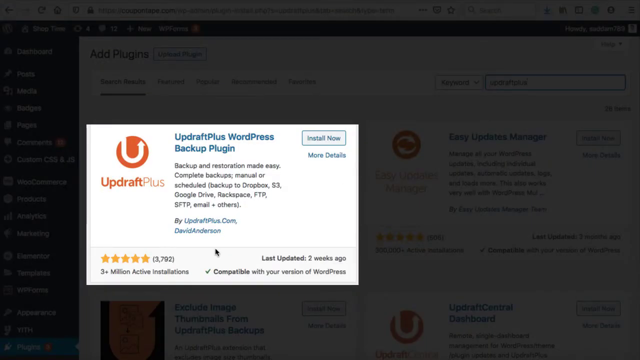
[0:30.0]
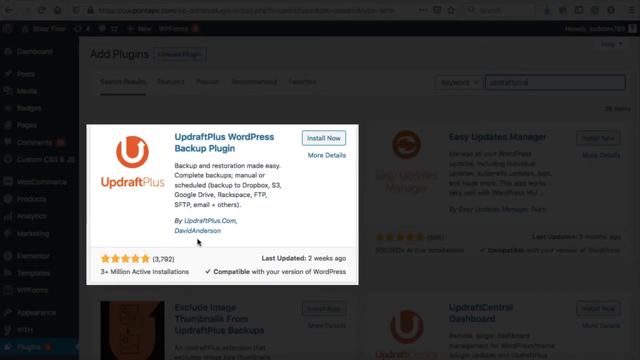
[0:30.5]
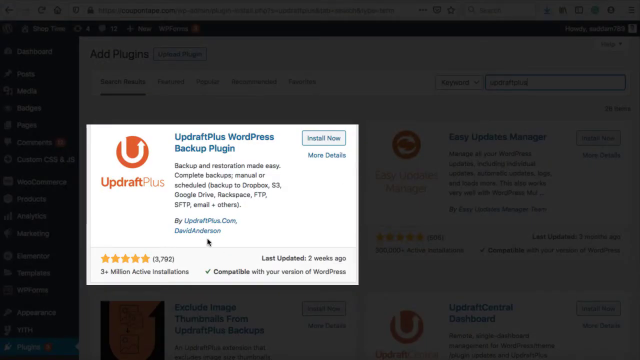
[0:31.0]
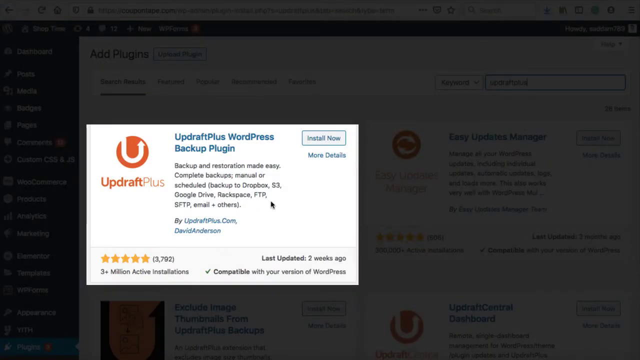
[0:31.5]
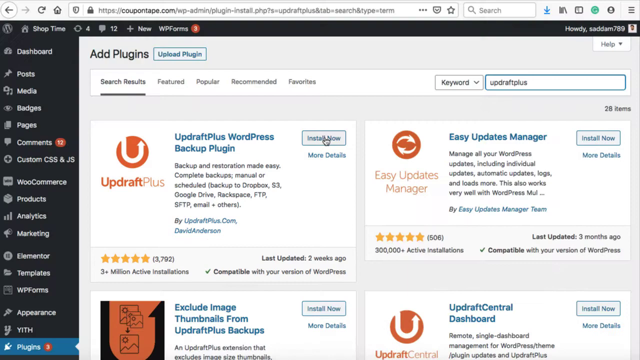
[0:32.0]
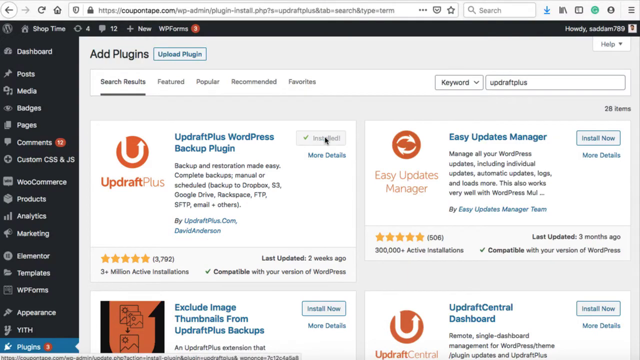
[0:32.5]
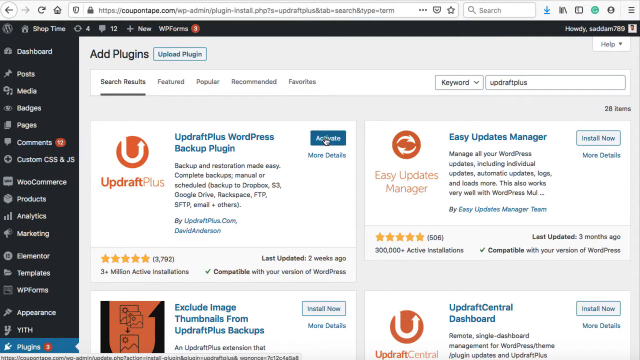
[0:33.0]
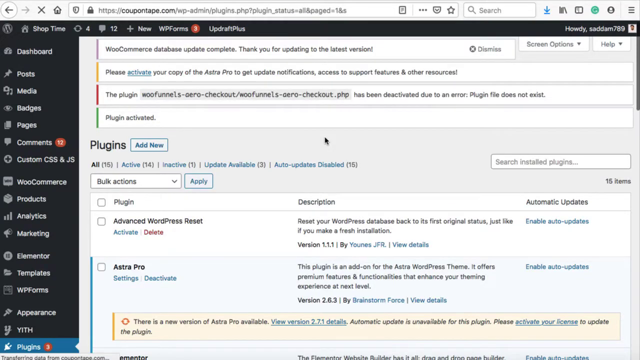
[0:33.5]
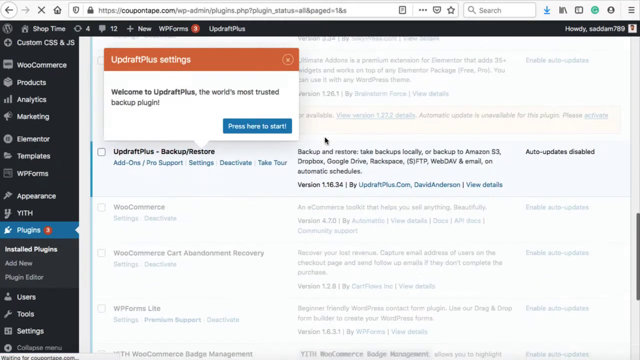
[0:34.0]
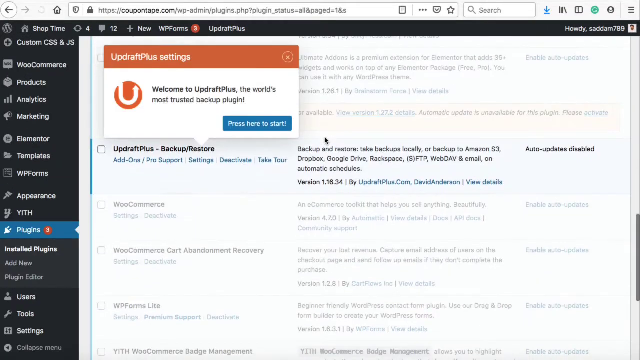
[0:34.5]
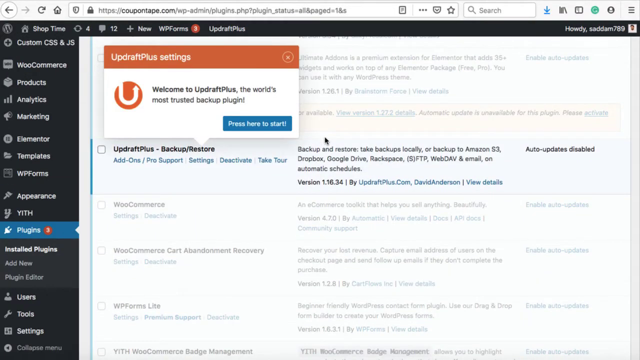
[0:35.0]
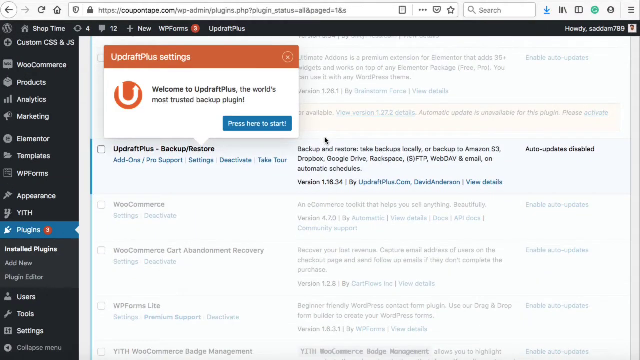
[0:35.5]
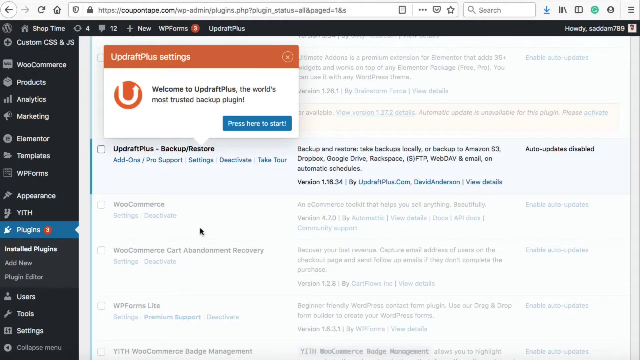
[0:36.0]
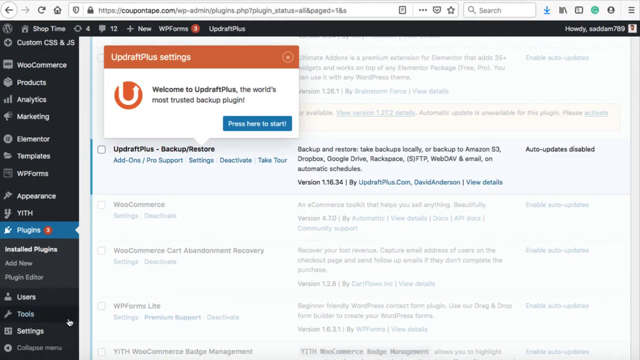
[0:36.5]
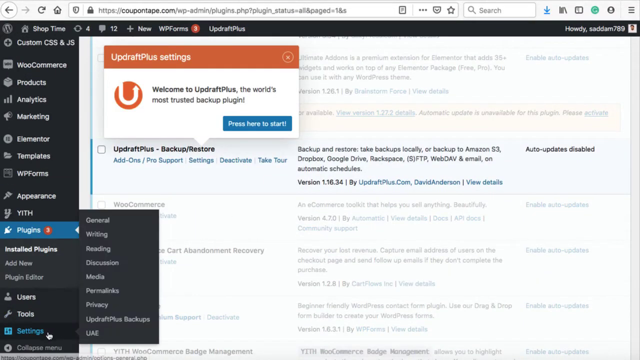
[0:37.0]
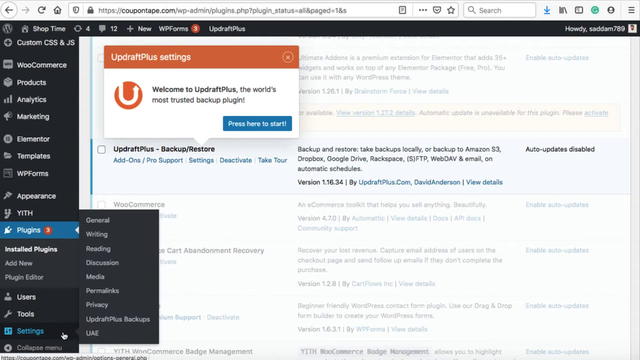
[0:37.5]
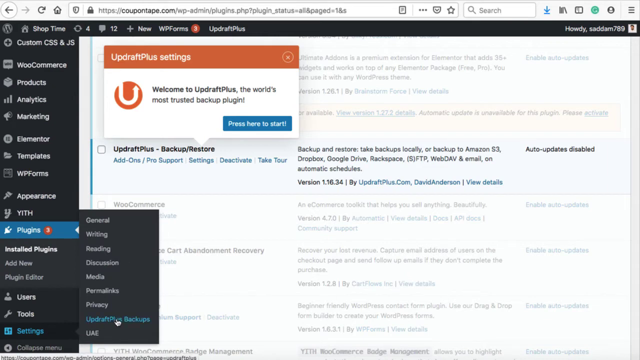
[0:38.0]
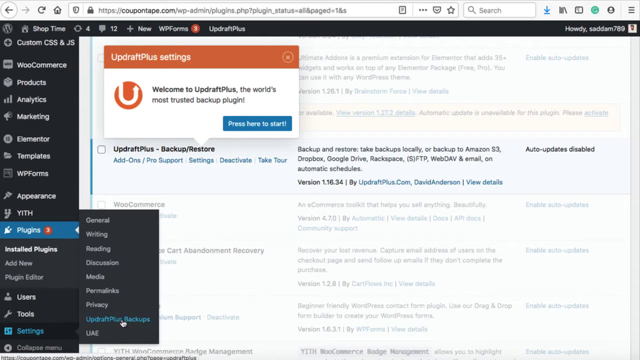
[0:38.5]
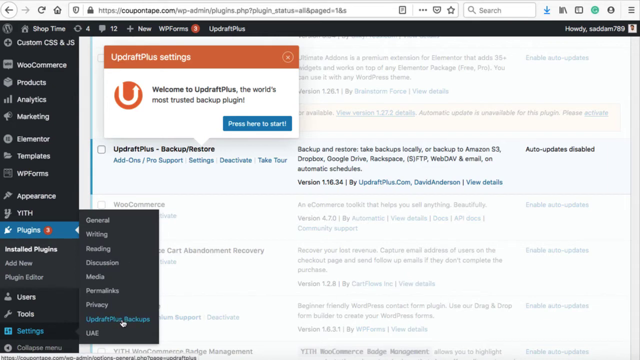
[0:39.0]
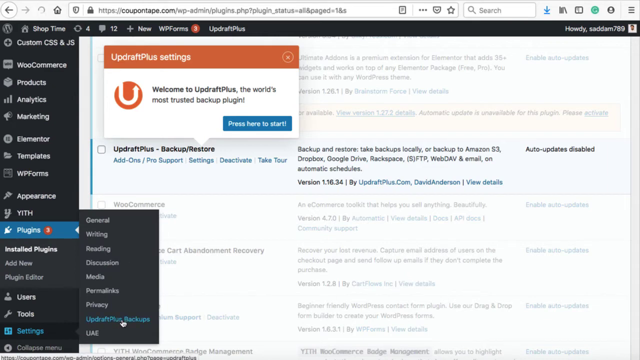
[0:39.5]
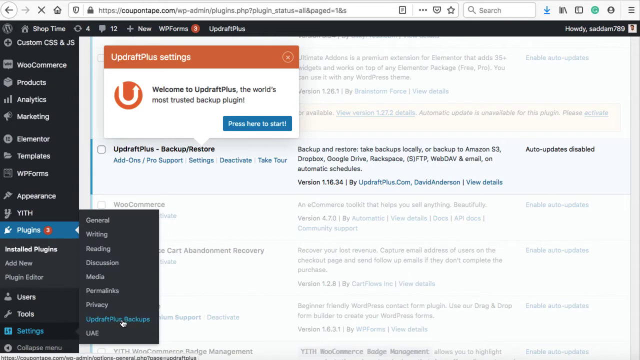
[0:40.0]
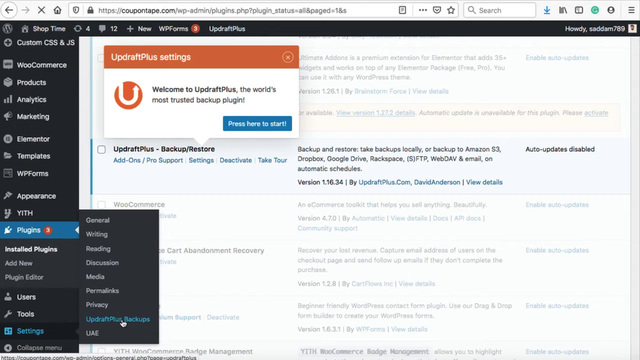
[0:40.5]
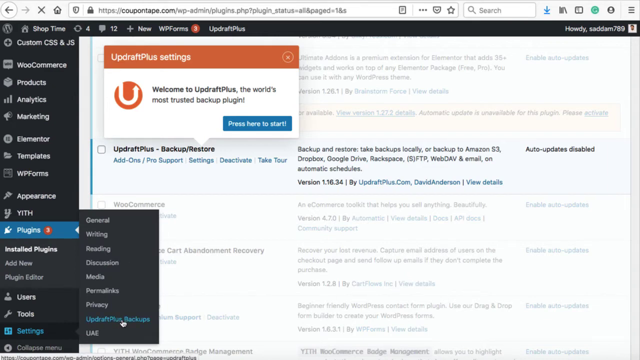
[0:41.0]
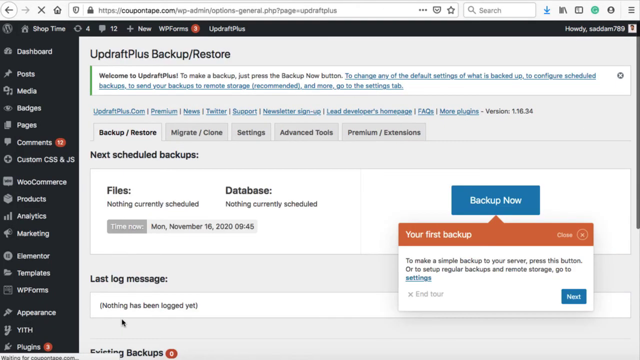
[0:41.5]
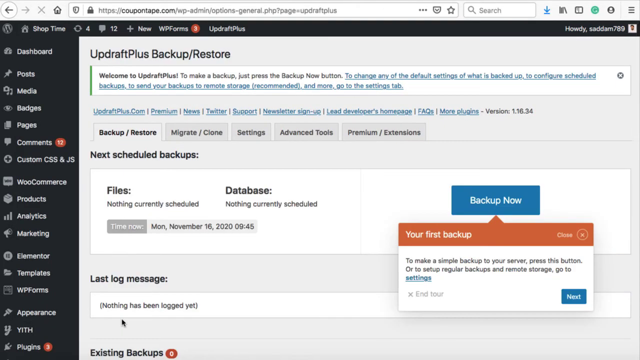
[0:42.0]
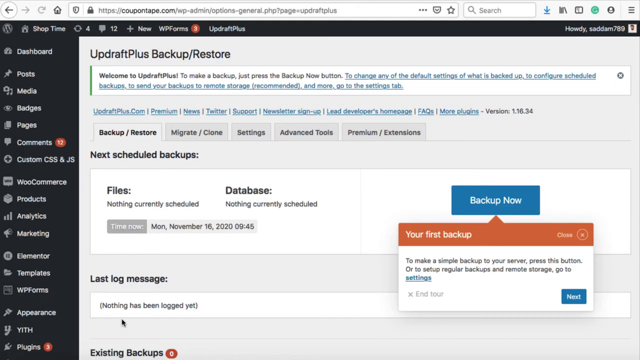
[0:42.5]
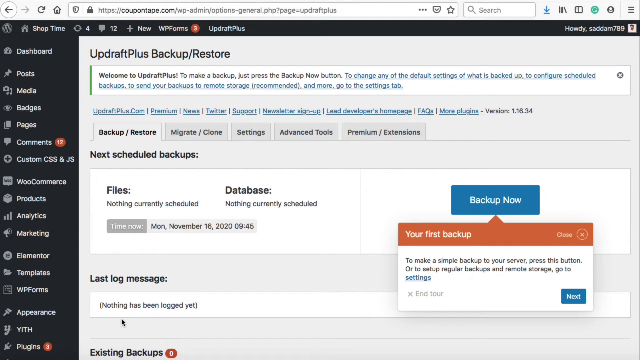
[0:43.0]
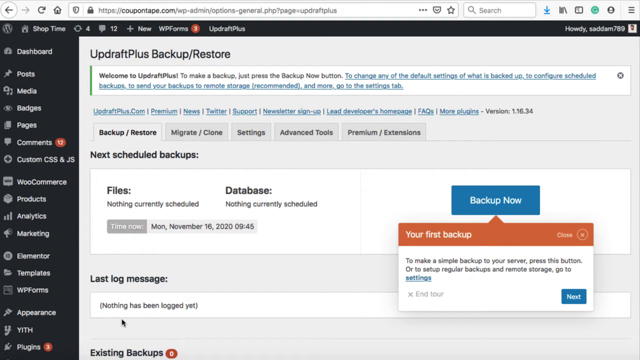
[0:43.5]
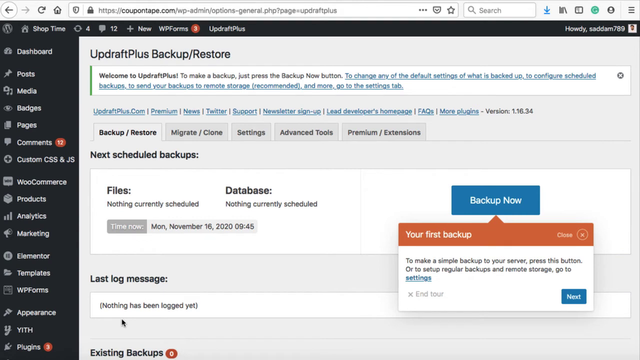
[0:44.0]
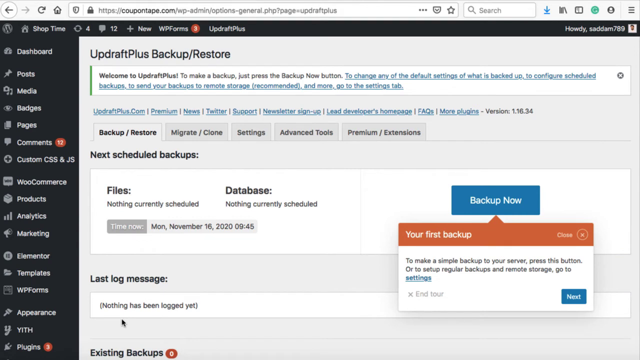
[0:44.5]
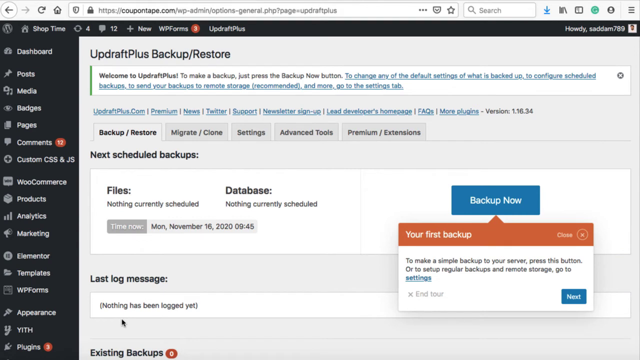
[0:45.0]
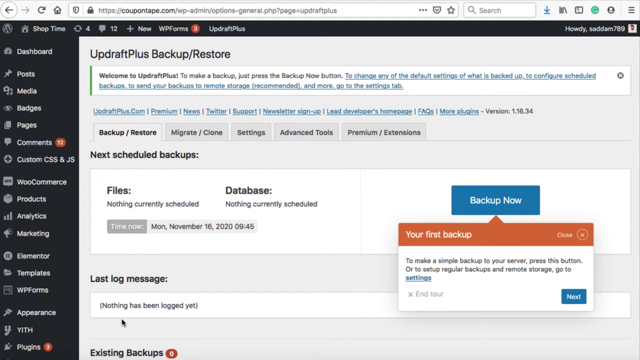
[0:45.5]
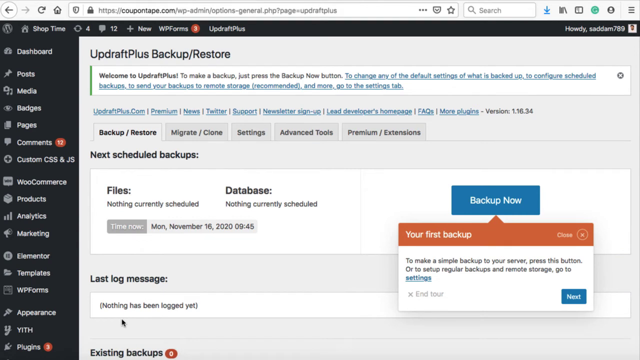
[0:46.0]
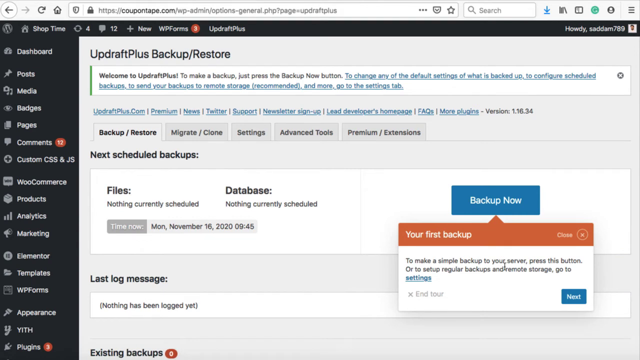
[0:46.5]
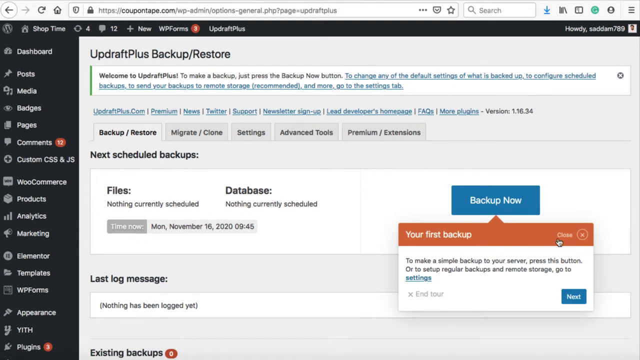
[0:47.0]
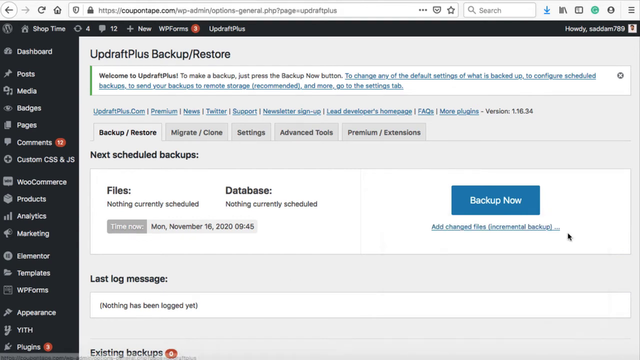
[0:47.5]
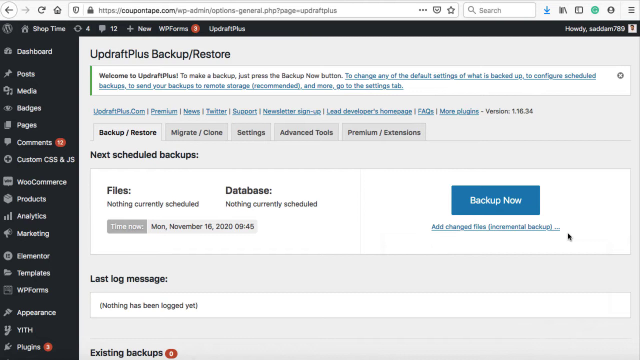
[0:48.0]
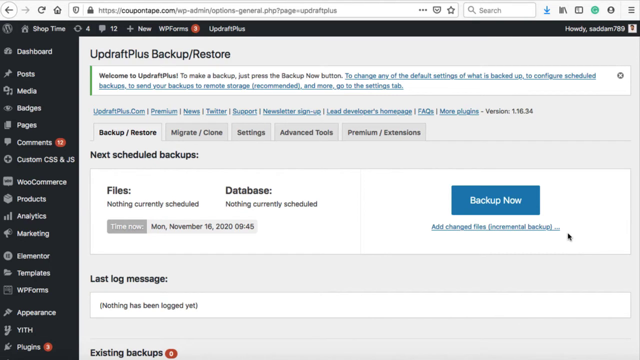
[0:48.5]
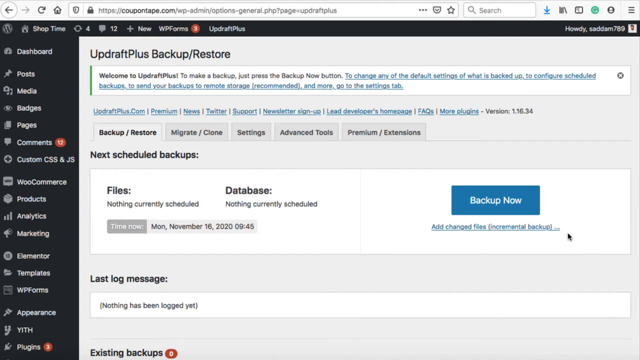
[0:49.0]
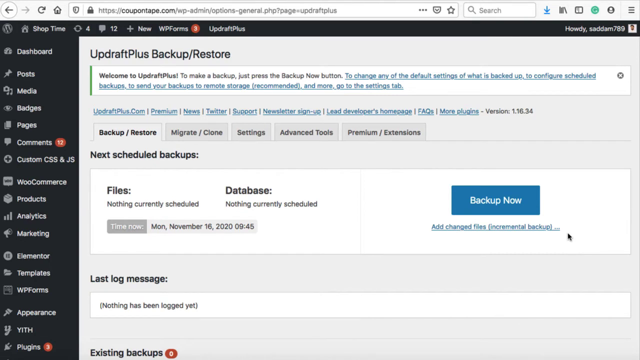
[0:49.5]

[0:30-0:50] A plugin called Updraft Plus WordPress Backup Plugin is shown, with an orange Updraft Plus logo next to it, black text underneath, a star rating, and an "install now" button. The cursor clicks "install now" and the screen changes to the plugins tab, where a window shows "Updraft Plus settings" in white text on an orange bar. The window reads "welcome to Updraft Plus, the world's most trusted backup plugin" and has a blue button that says "press here to start." The cursor then moves to the left toolbar and clicks "Updraft Plus backups," leading to a page listing scheduled backups, though none are scheduled yet. A blue button reads "backup now" in white text, and the cursor hovers over it. Most of the text on the screen is black, but some links appear blue. The toolbar on the left side of the page has a black background with white text and options such as products, analytics, marketing, templates, appearance, plugins, and users. The top of the page has a black header with more options such as new and shop time, and the person's profile picture is in the top right corner.